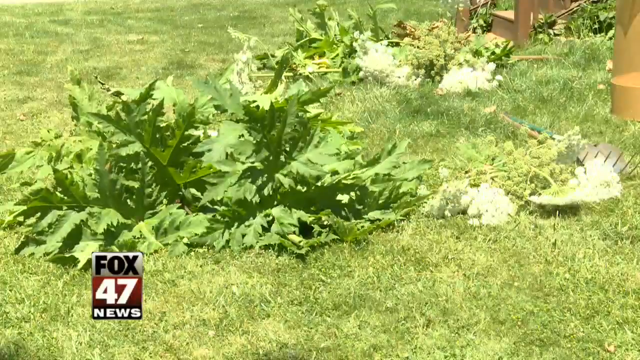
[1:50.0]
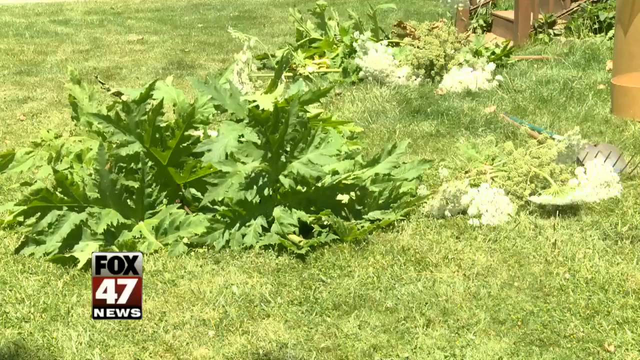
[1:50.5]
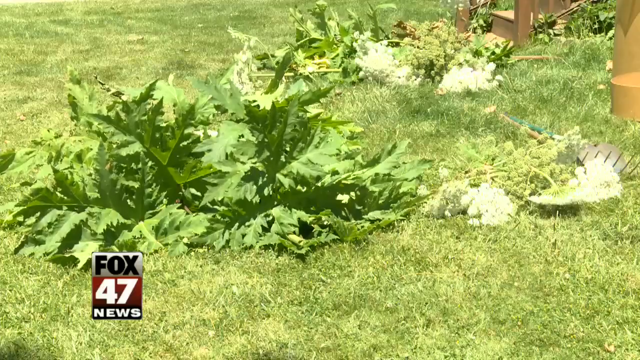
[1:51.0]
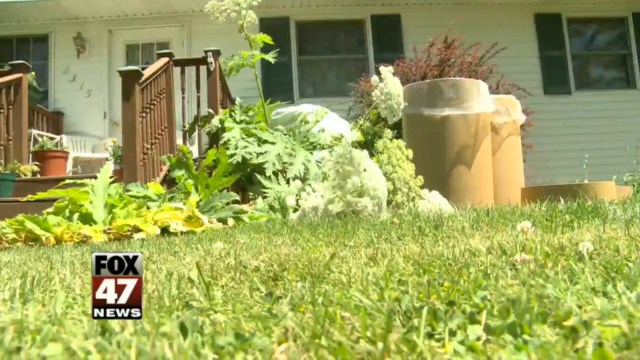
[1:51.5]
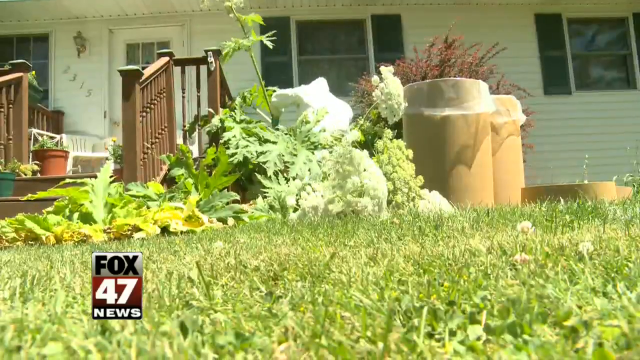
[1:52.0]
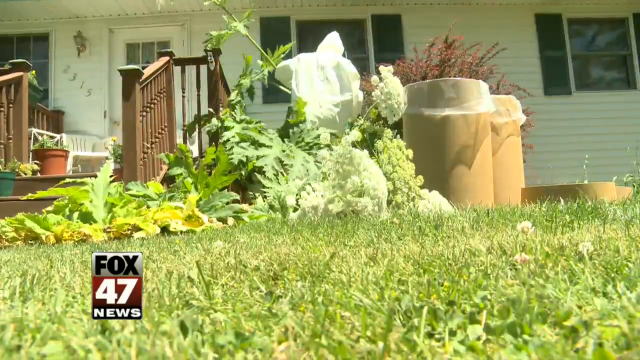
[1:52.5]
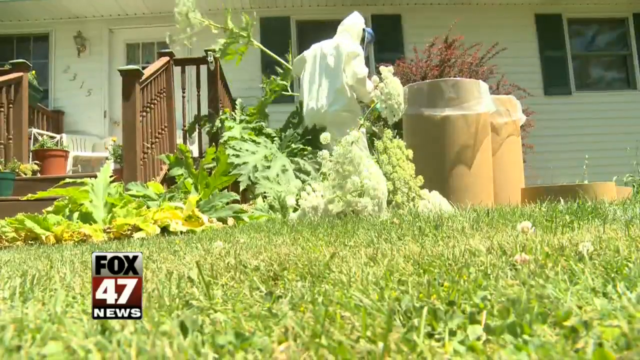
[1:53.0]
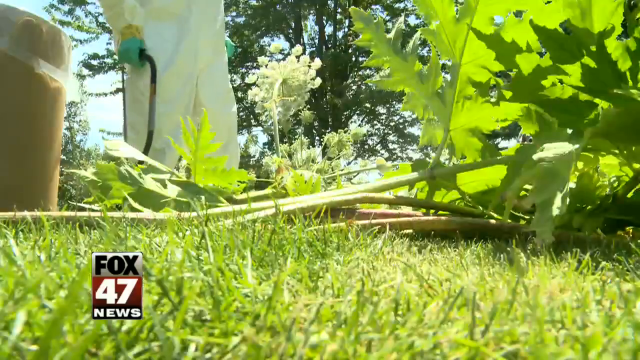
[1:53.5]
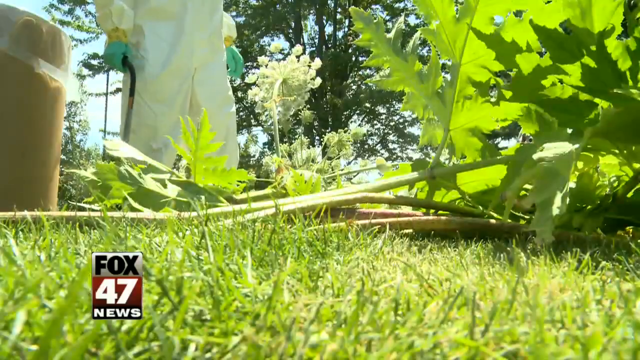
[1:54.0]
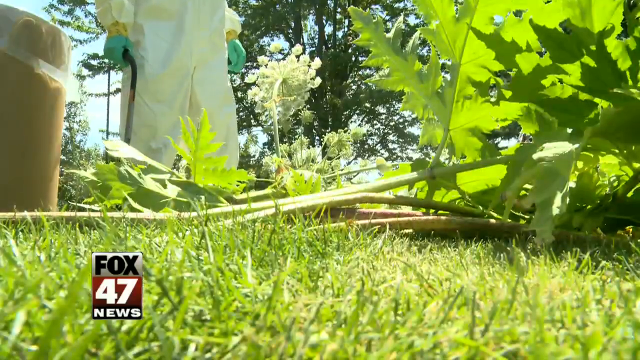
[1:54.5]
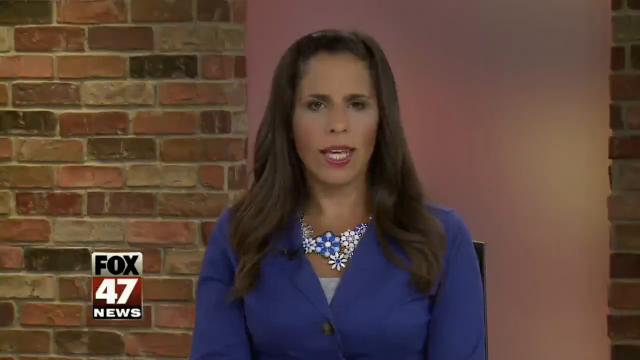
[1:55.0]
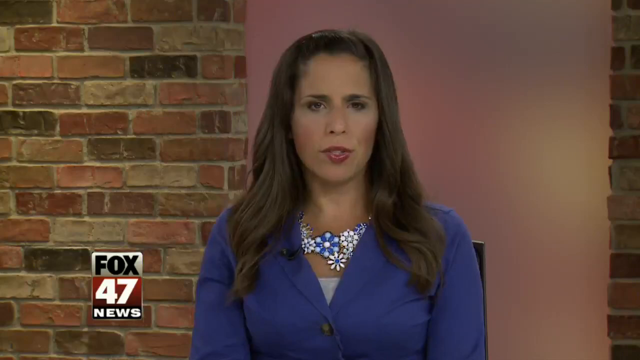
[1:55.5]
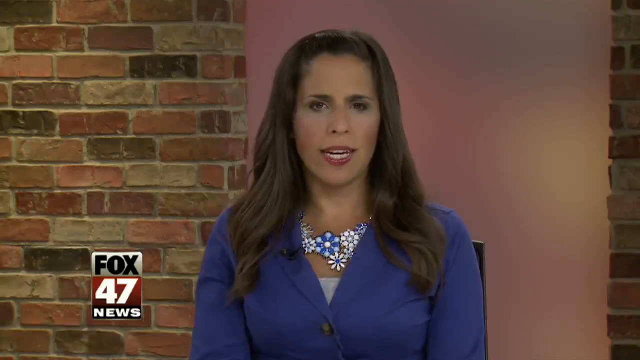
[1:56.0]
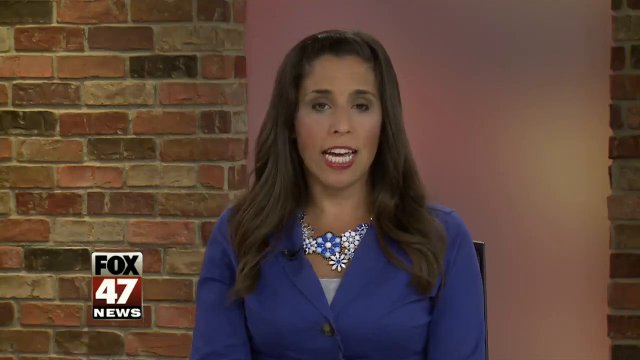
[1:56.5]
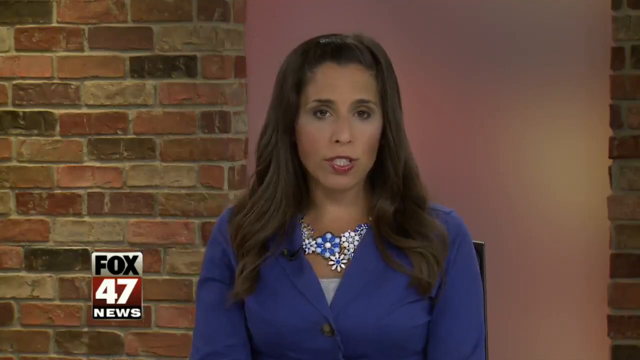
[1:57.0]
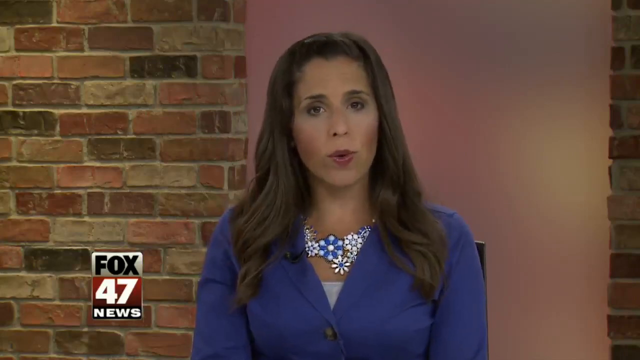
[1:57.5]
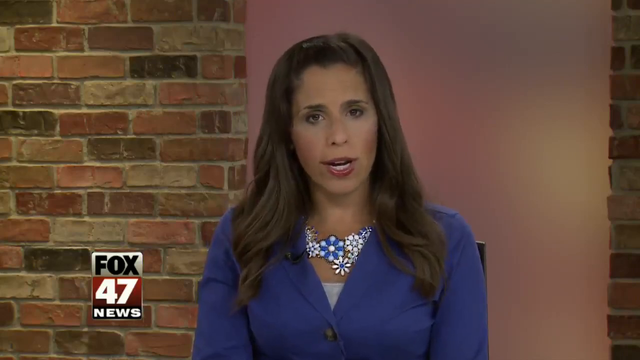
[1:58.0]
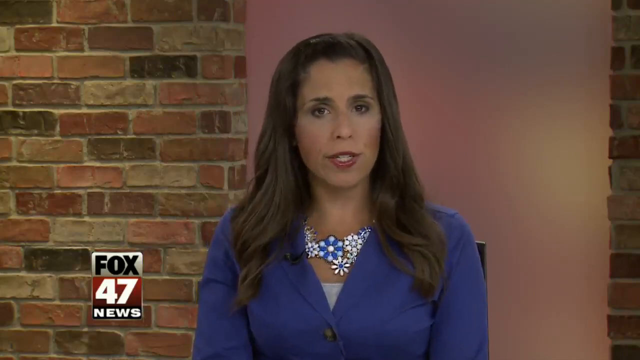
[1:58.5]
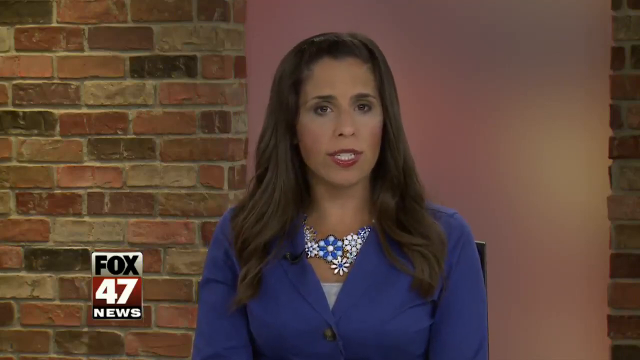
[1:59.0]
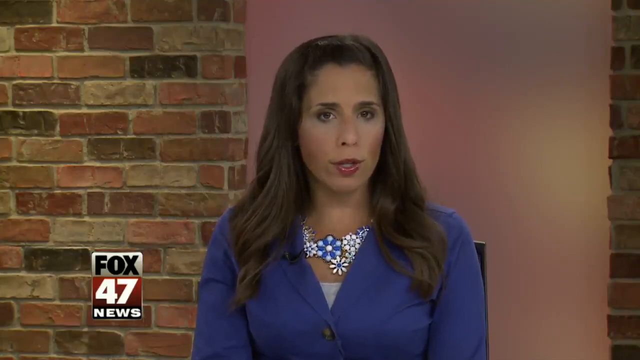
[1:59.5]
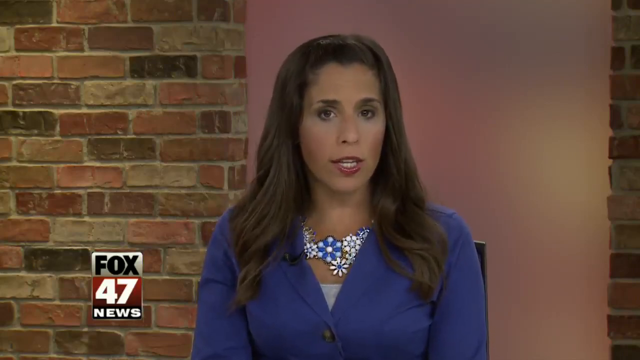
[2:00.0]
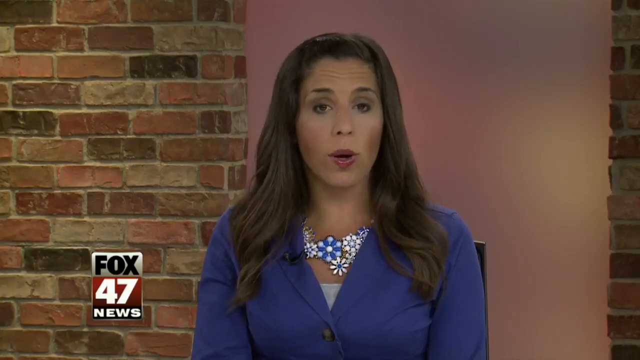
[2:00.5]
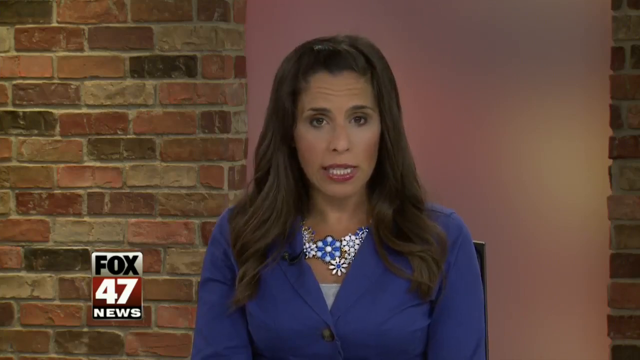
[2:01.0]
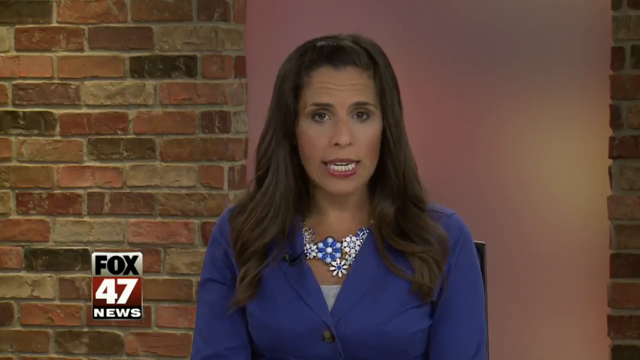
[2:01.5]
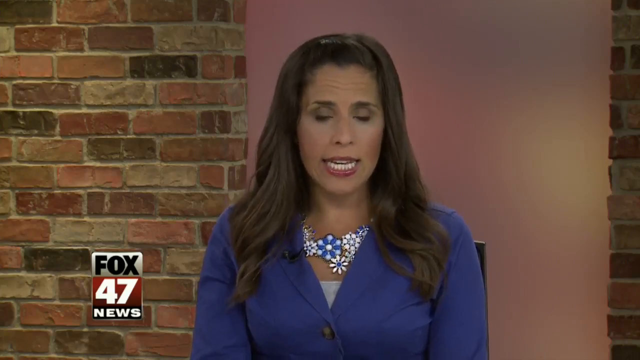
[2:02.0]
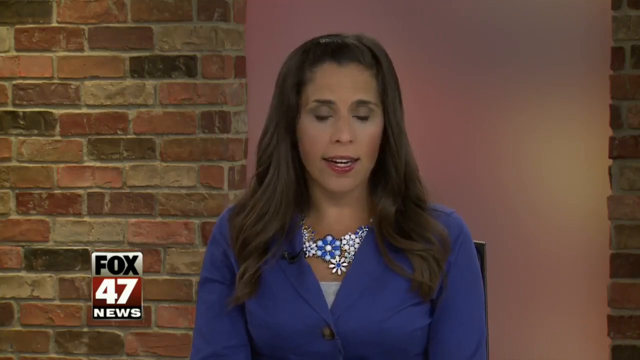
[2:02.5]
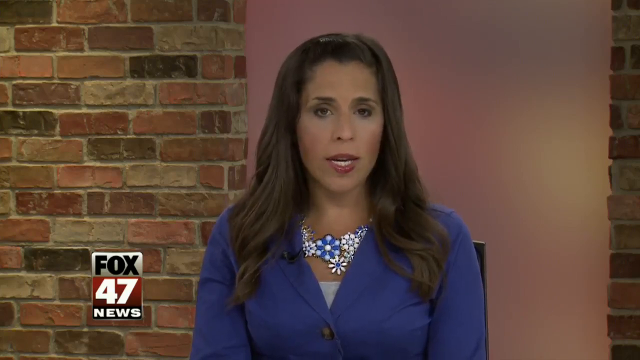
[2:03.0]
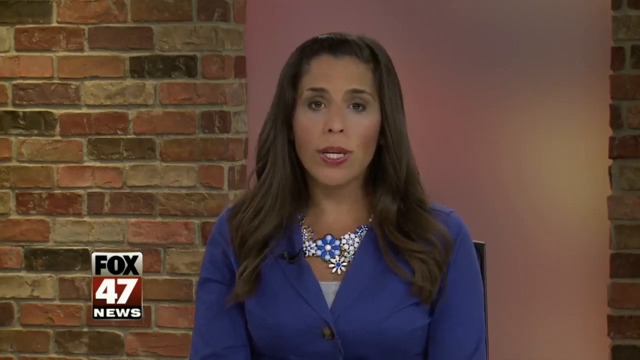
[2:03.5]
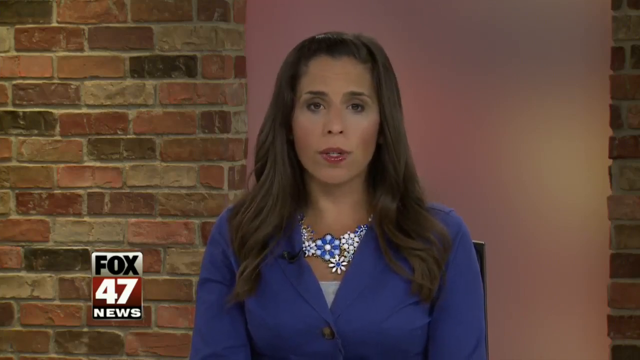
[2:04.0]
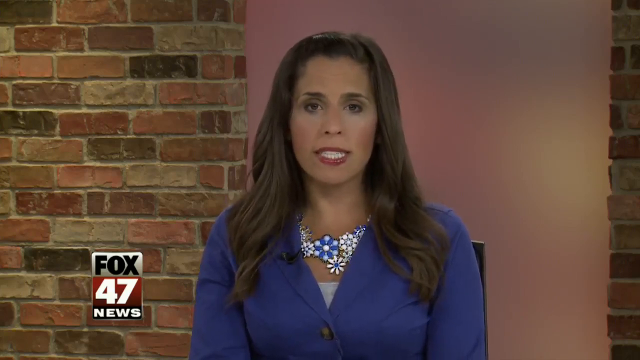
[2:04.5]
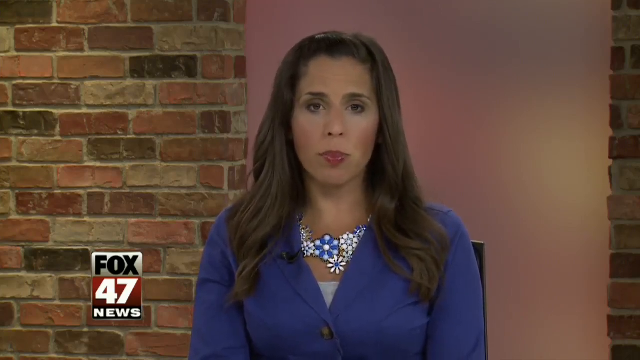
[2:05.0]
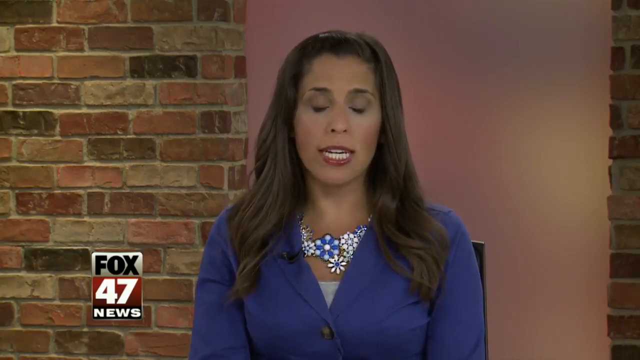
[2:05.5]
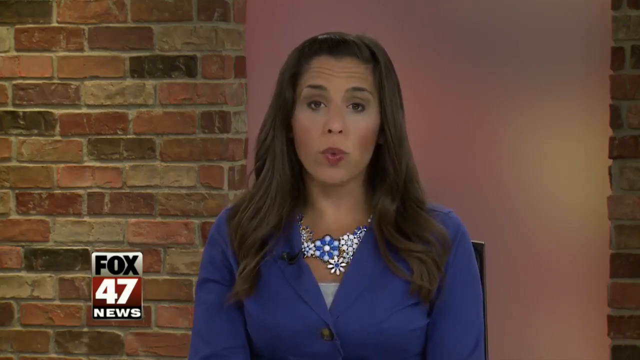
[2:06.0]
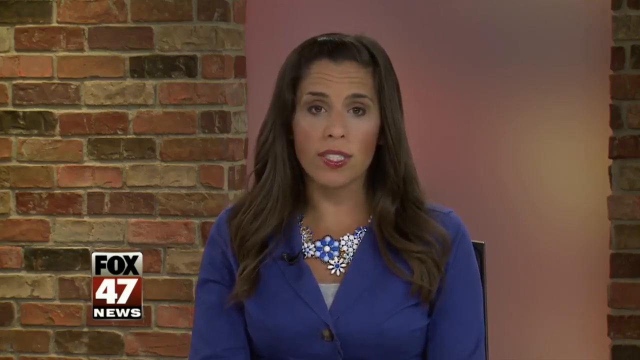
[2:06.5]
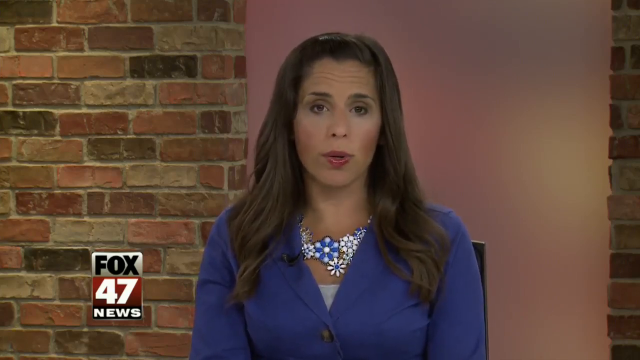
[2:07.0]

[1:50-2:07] The cut-up trees lie on the grass. The white flowers are separated from the green leaves, and the stems cannot be seen. They move and sway in the wind. A man in full PPE uniform picks up a tree and turns towards the camera, holding a hacksaw in his right hand. The man holds the tree in both hands; next to him are bins with what looks like plastic over them, and he takes the trees and puts them into the bins. In the studio, the woman in a blue coat and a flower necklace sits in front of a face brick wall, speaking into the camera and moving her head slightly forward every time she speaks.